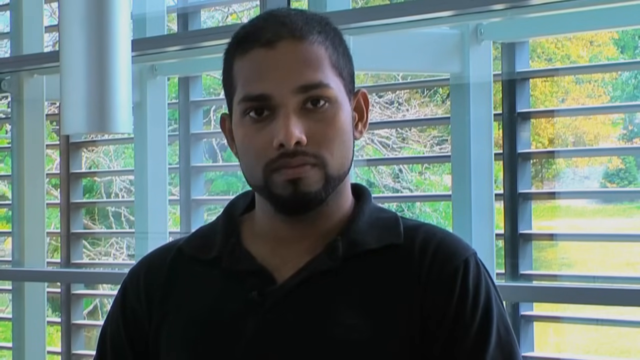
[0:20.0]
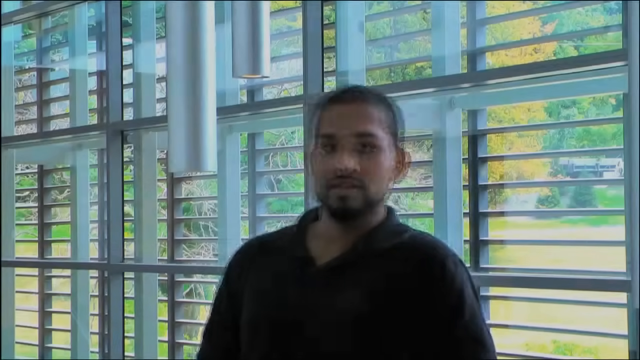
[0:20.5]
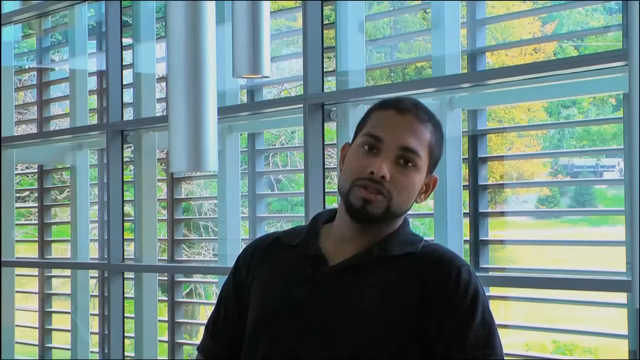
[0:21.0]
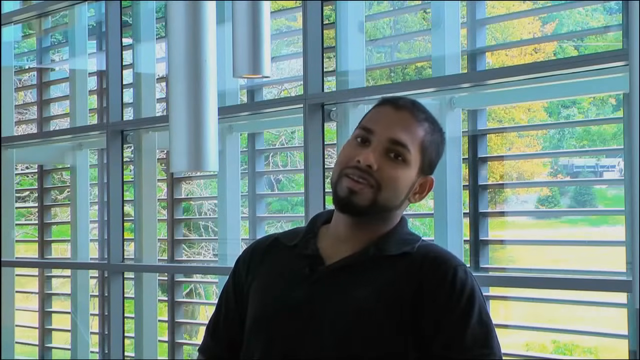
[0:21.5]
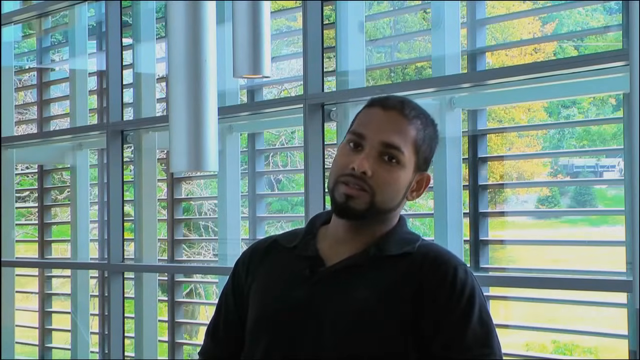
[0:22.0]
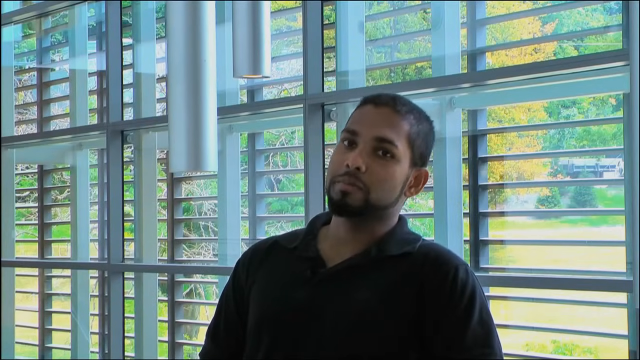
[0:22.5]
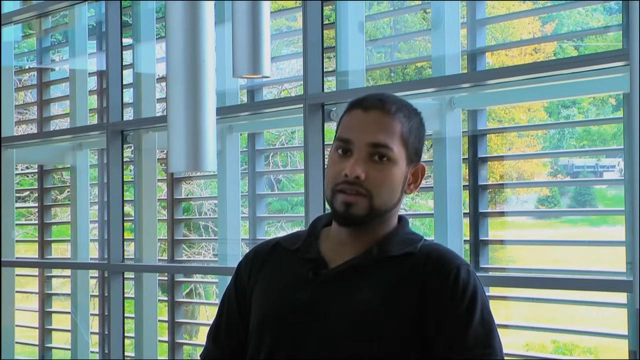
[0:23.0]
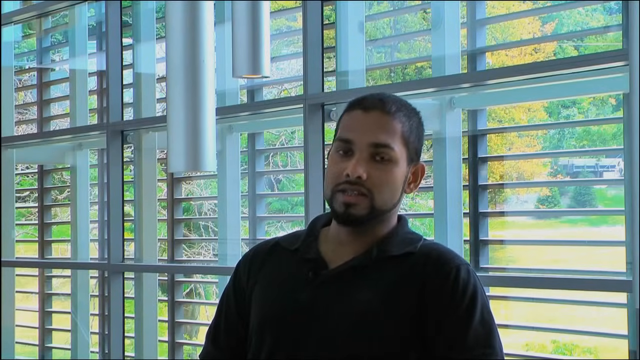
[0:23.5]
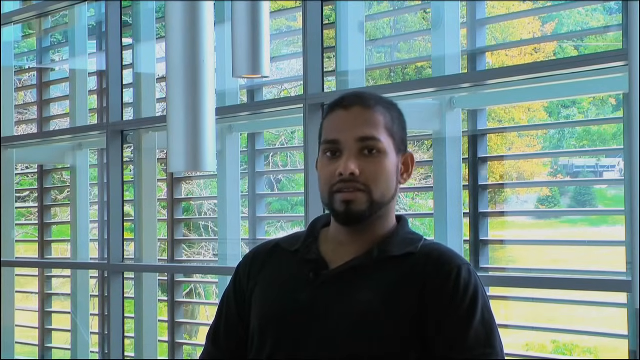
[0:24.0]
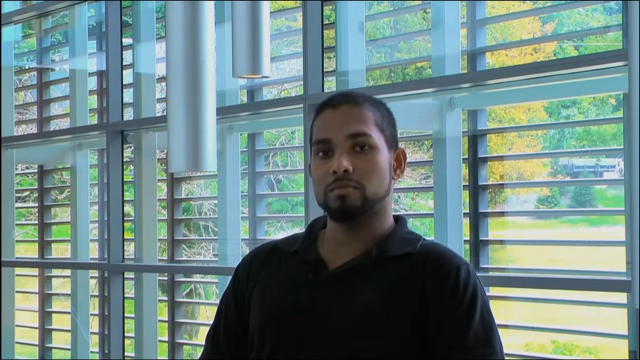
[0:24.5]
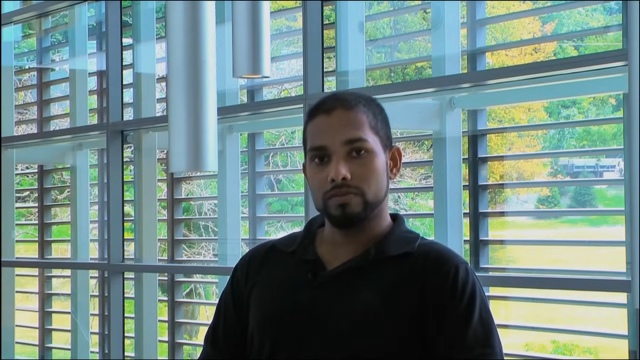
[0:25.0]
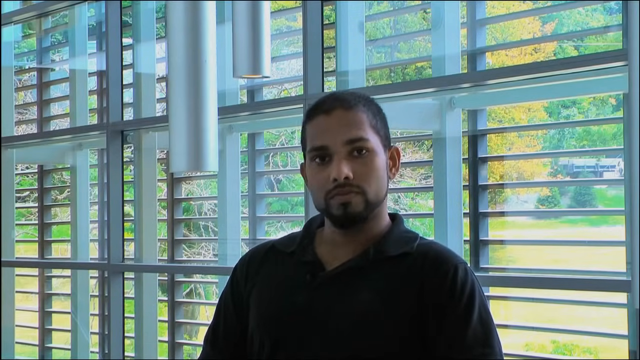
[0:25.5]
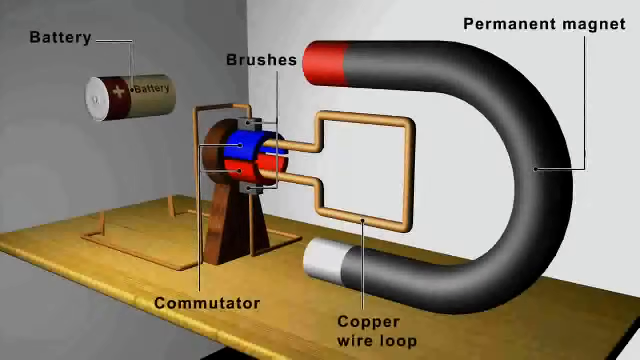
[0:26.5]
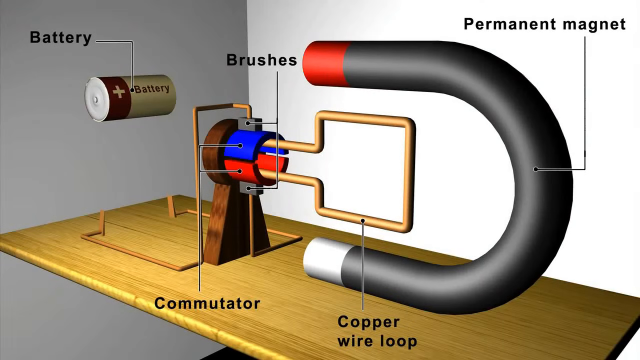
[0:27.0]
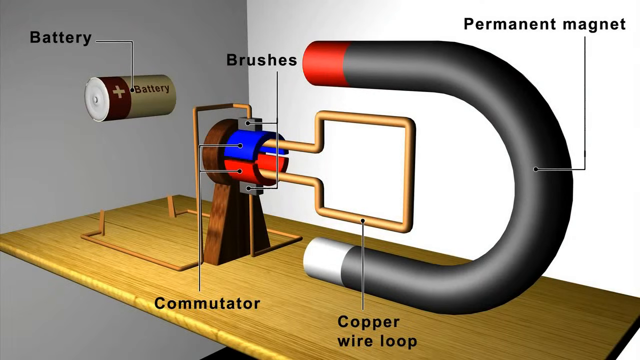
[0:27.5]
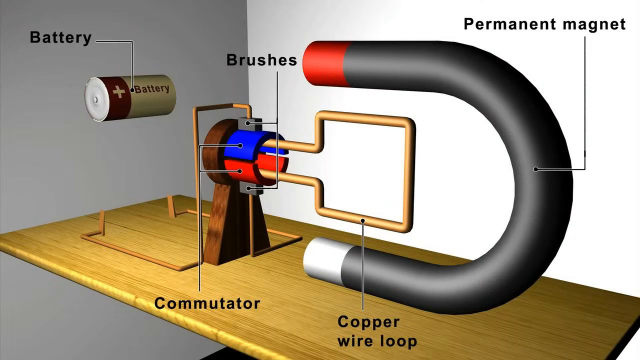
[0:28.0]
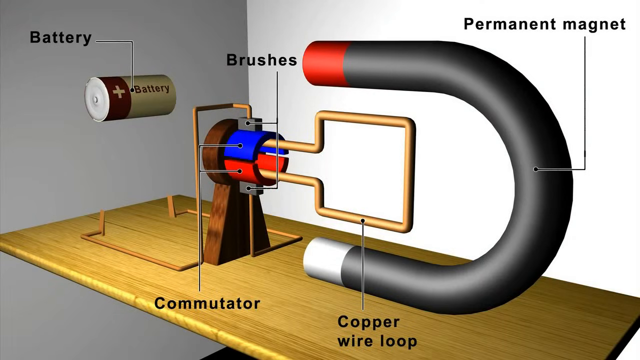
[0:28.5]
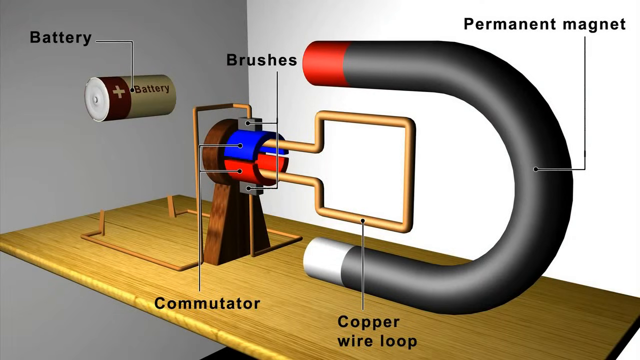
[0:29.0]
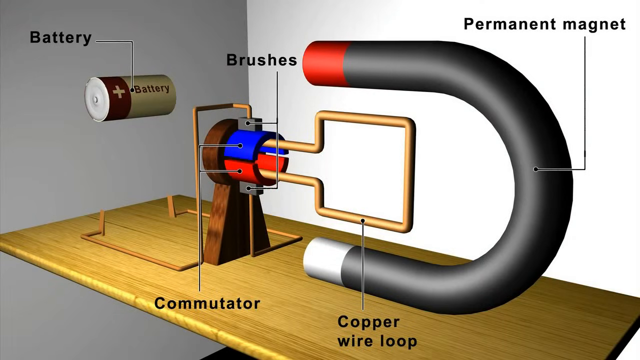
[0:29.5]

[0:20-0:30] The man keeps talking to the camera as the view switches to a different, farther-away angle, where he leans back as if sitting on a chair while speaking. The screen turns black for a split second, then a diagram with different parts on top of a wood panel appears. It shows a battery, brushes, a permanent magnet, a copper wire loop and a commutator, which together form some sort of device. The diagram has a cartoon animation style.